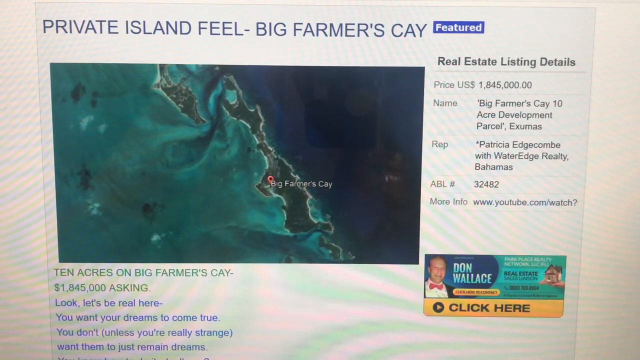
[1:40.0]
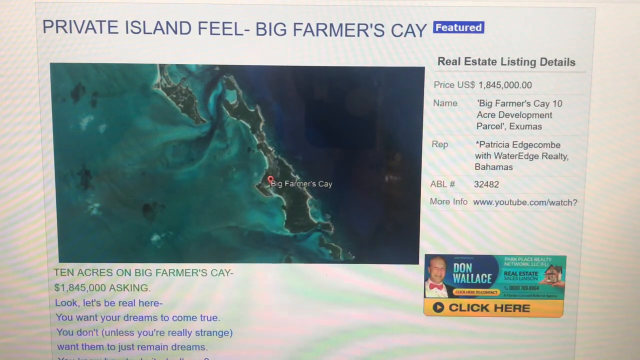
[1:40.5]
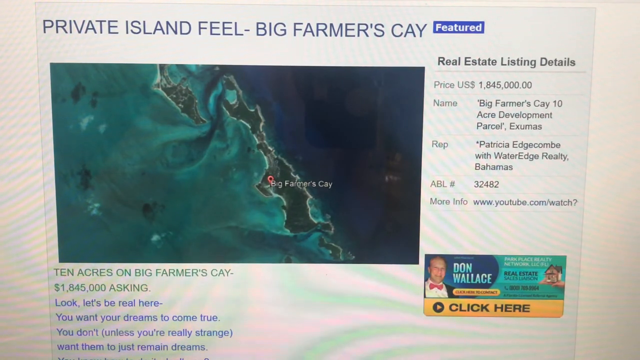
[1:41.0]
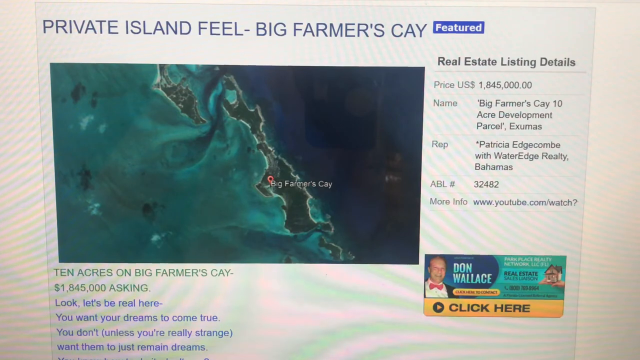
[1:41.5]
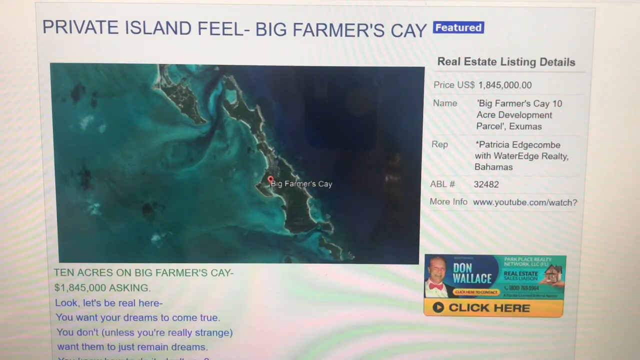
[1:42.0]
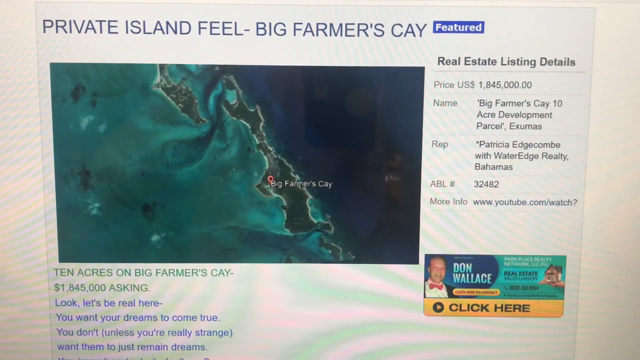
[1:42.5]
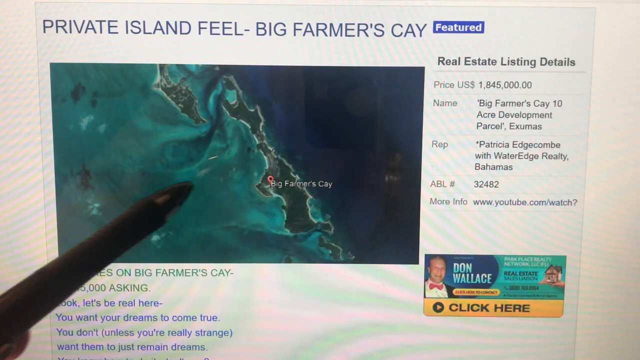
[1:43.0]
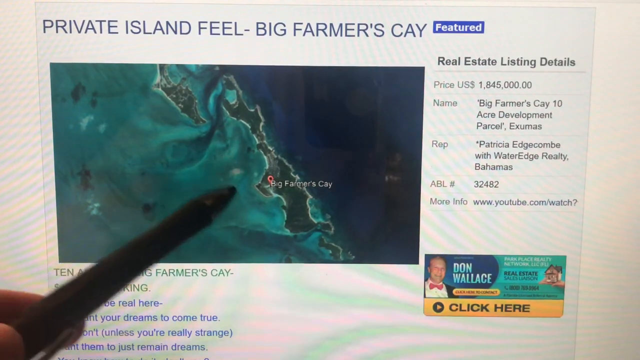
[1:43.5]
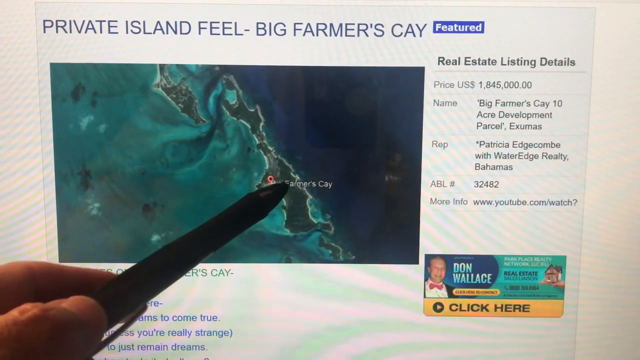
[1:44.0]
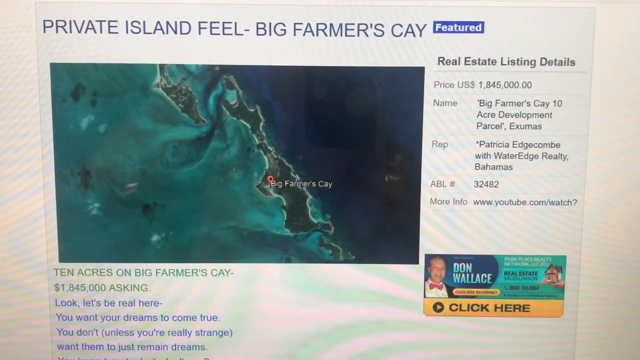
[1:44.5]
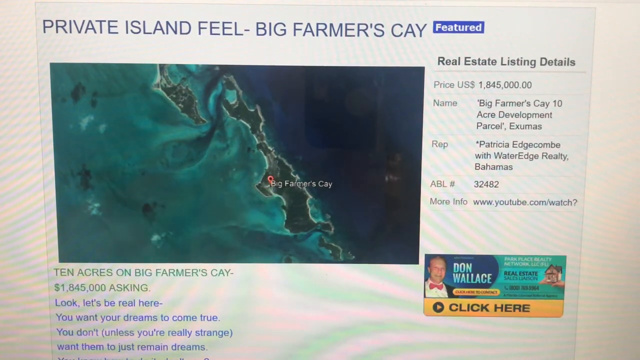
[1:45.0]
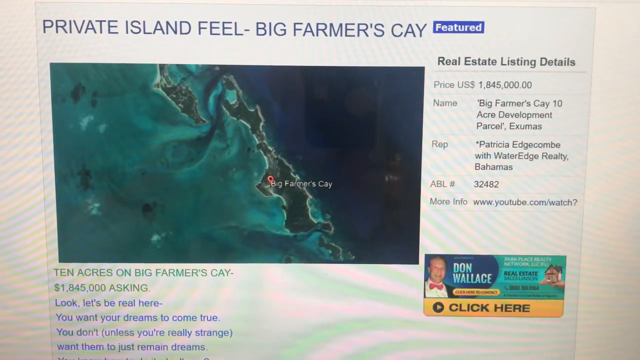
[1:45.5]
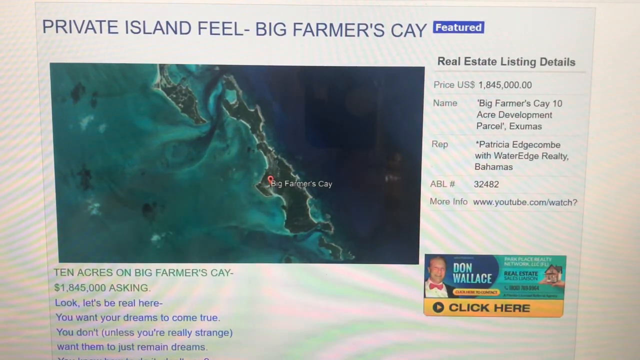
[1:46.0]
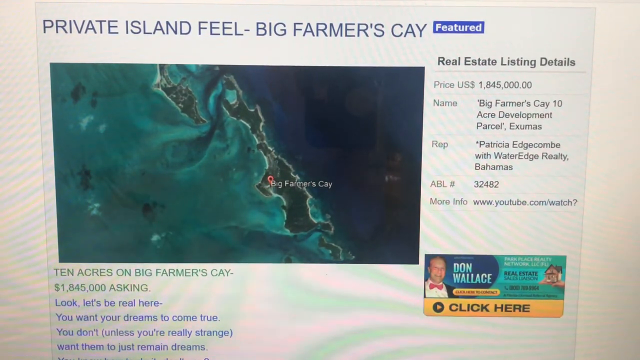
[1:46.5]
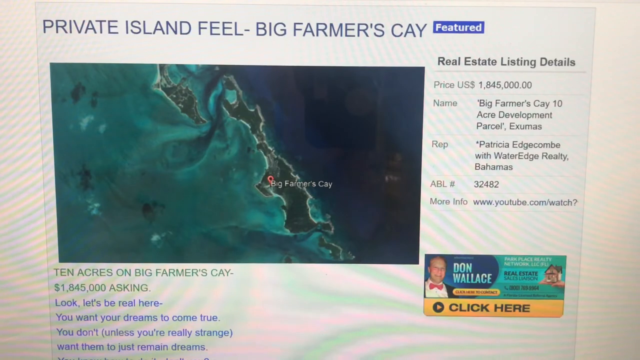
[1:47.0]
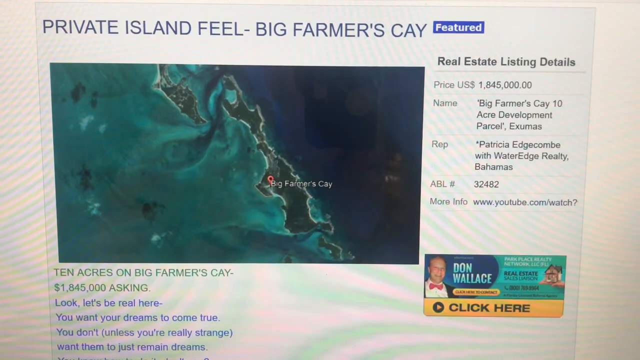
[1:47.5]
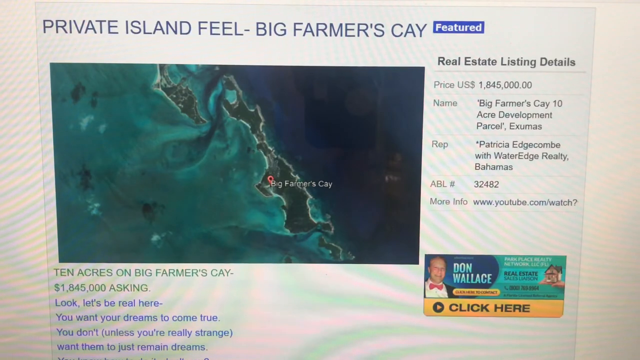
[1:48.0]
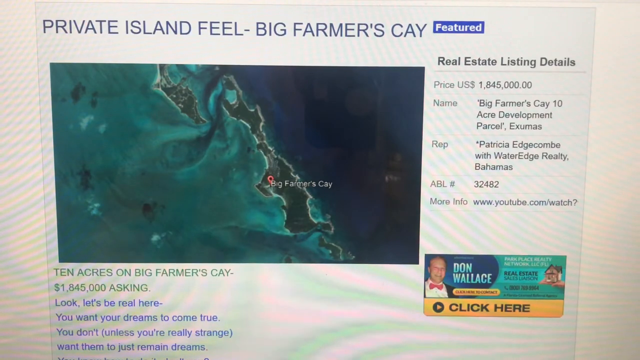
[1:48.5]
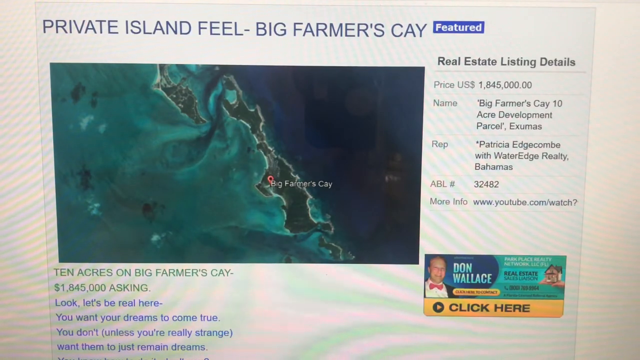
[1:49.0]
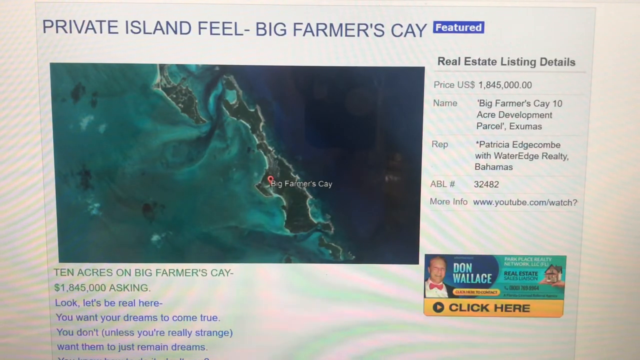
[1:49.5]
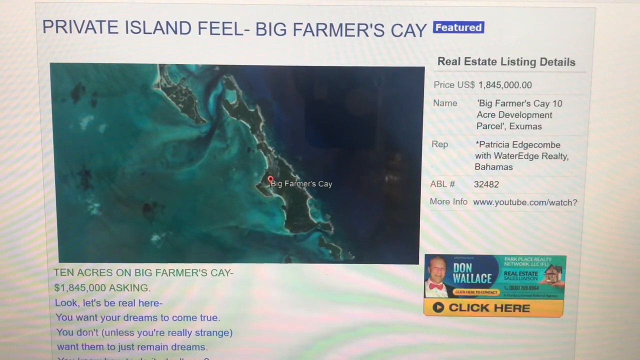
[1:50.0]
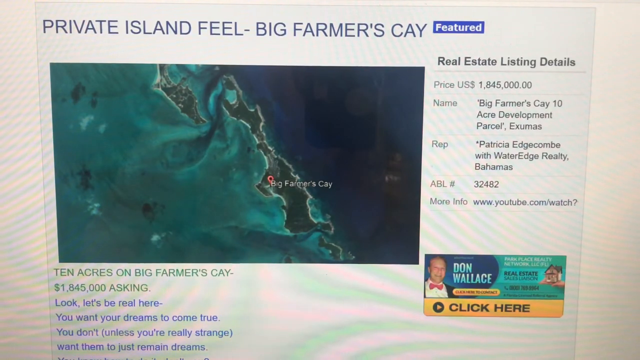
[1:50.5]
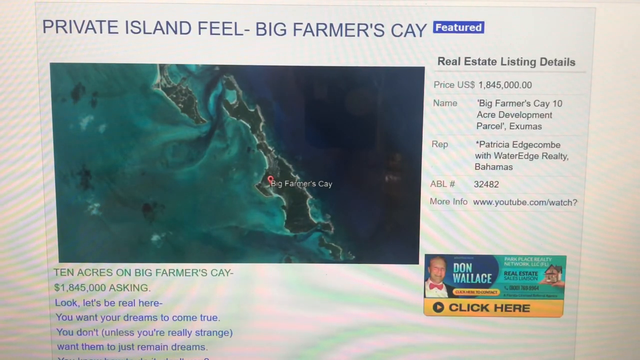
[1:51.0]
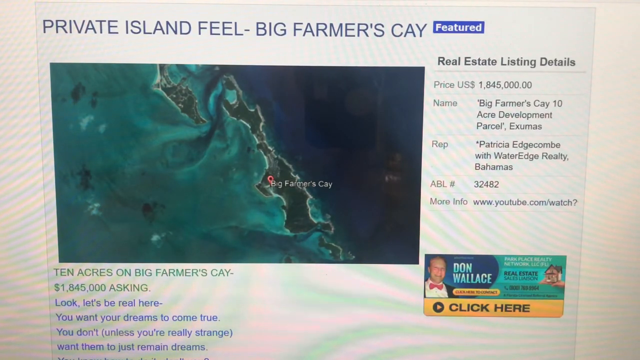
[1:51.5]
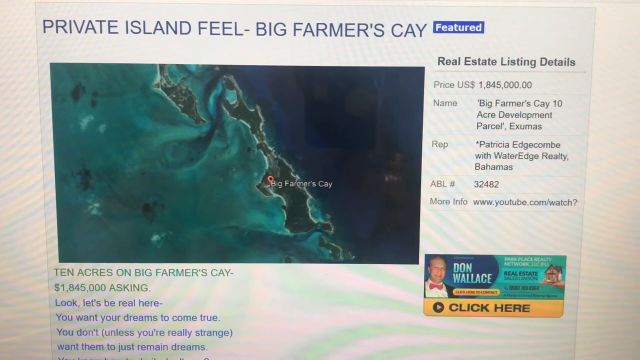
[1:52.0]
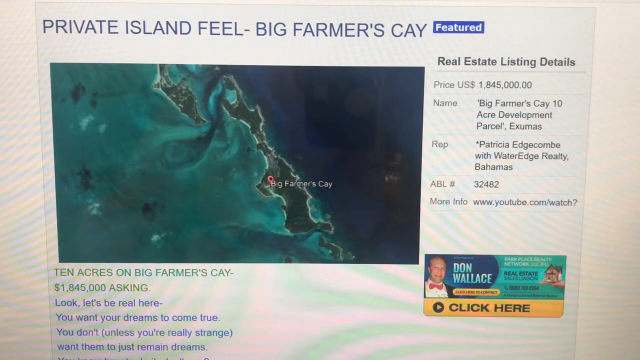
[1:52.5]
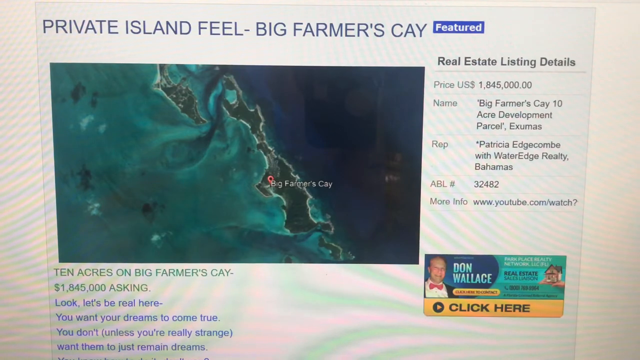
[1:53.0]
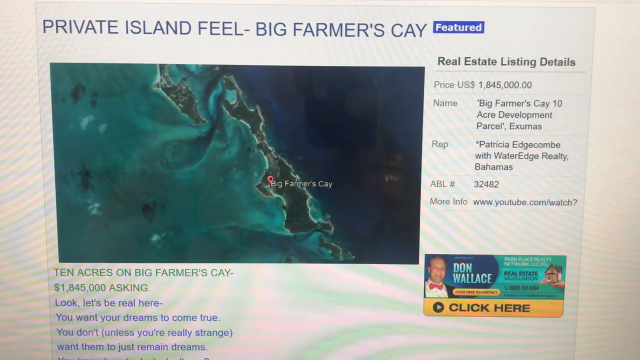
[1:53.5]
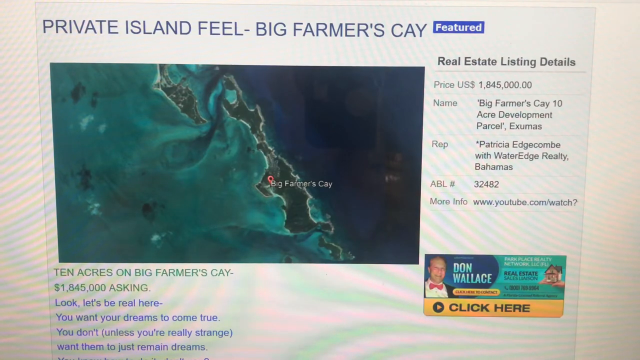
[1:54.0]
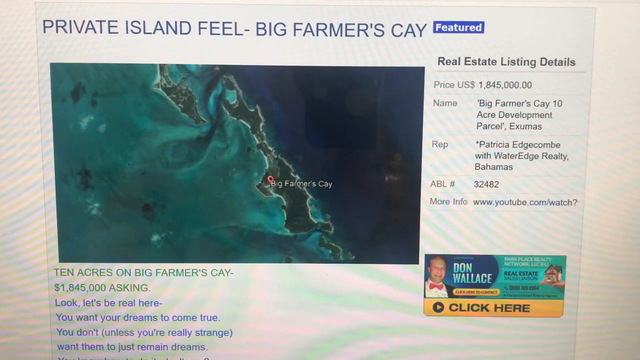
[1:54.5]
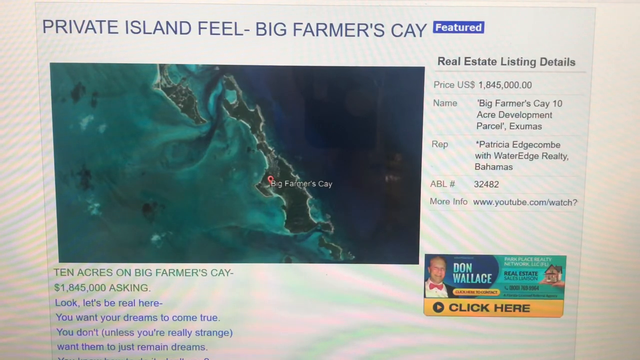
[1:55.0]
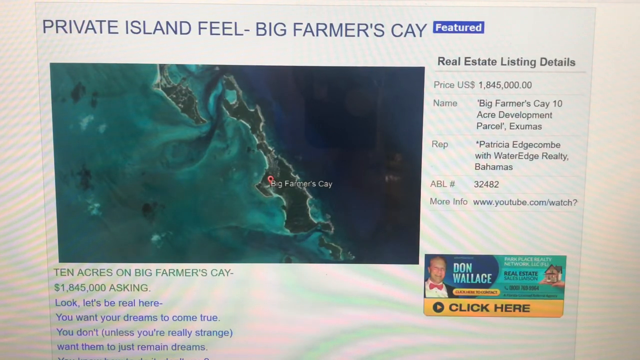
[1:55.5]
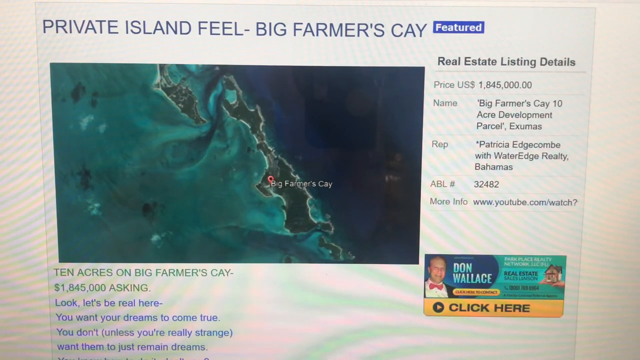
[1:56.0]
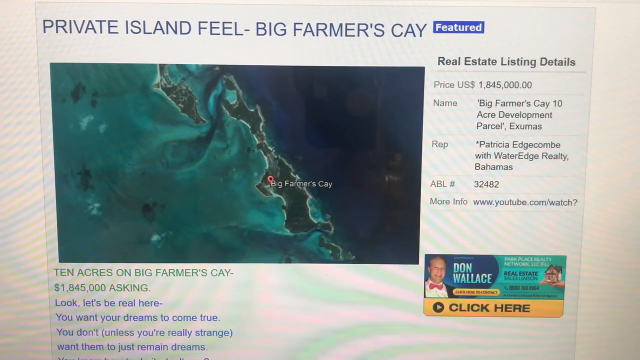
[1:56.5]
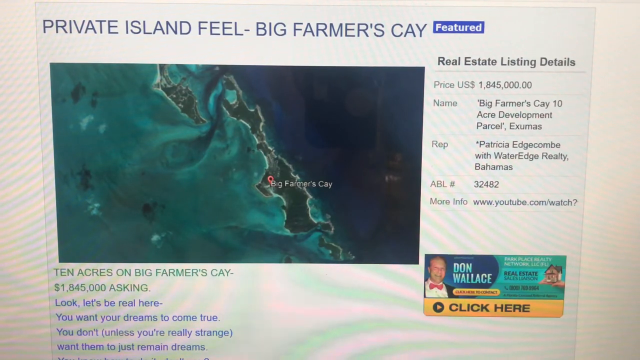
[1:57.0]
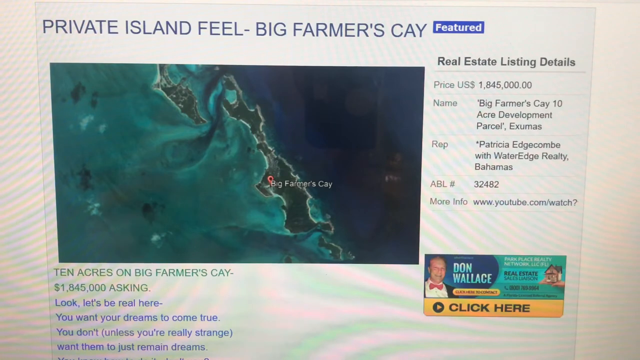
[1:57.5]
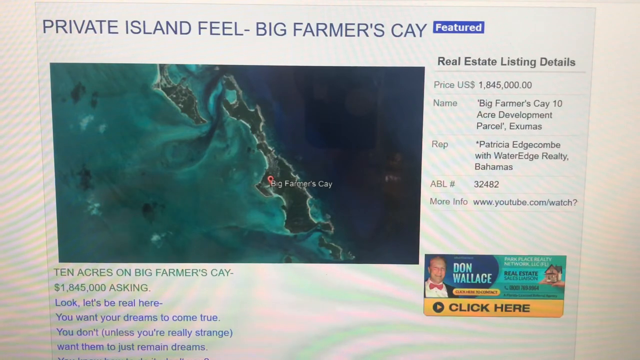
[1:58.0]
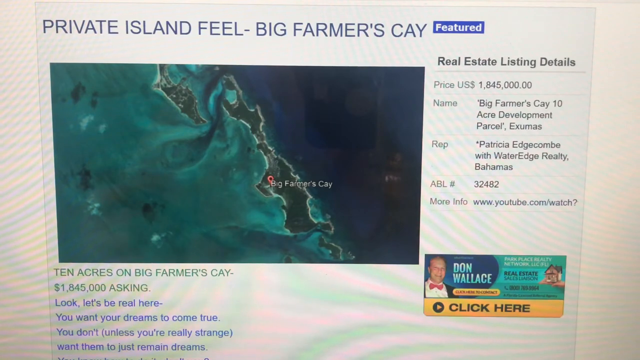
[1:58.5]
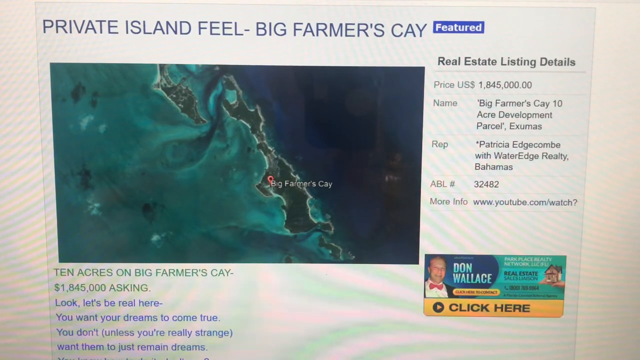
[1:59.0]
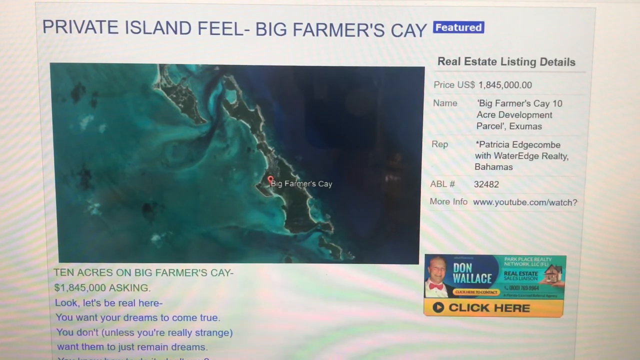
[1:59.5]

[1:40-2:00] The person recording still shows with the pen where the acres are located on the picture, and also points to the name of the place. Changes in the position of their hand are visible in its reflection on the screen. The picture shows details of the island, such as a route by which a boat could go from one side to the other without crossing land, and where the ocean water reaches the left side past the island. Another island is at the top left, possibly populated.